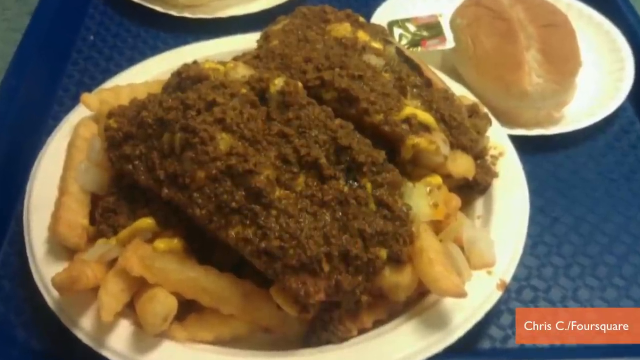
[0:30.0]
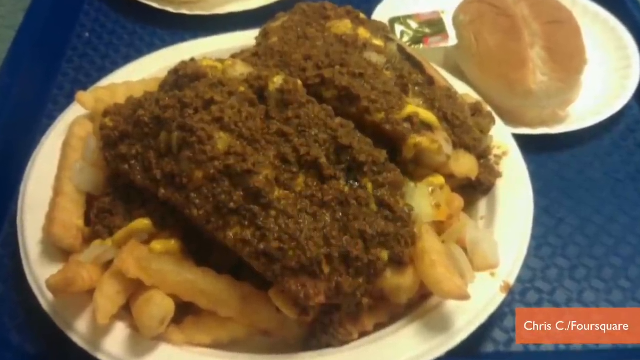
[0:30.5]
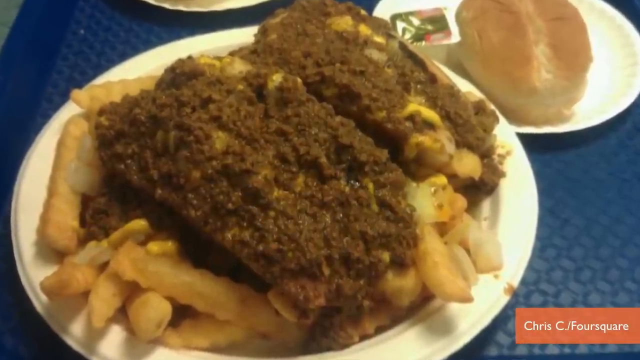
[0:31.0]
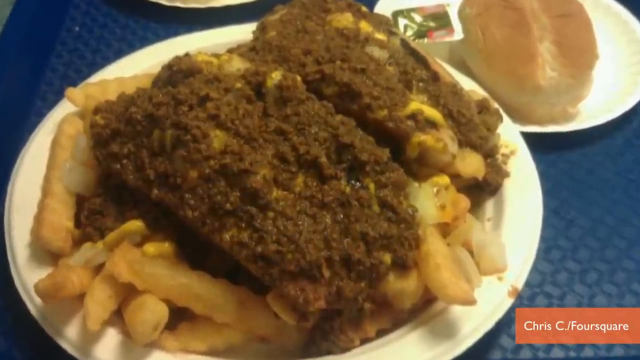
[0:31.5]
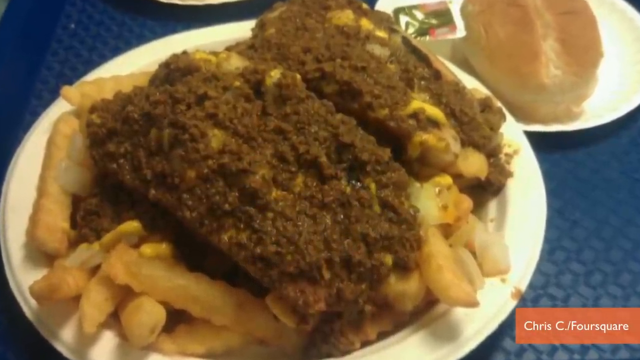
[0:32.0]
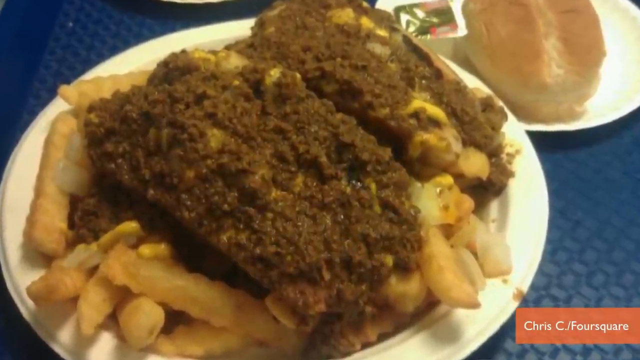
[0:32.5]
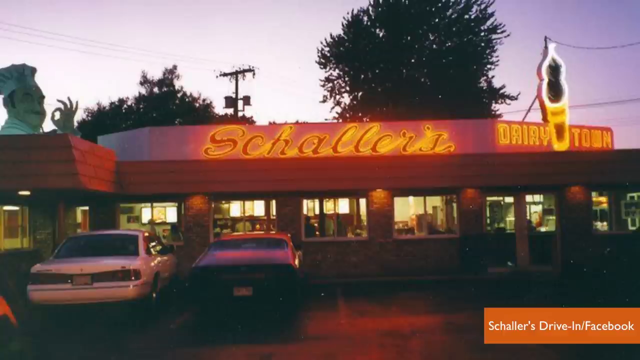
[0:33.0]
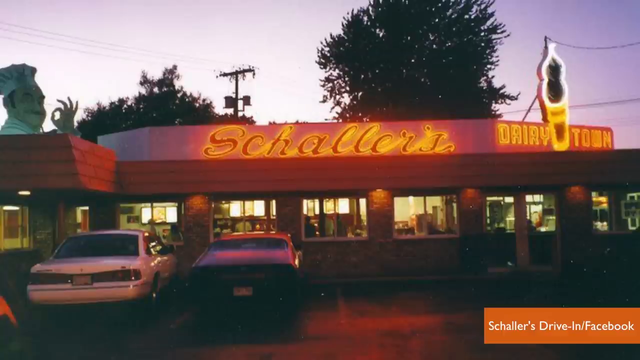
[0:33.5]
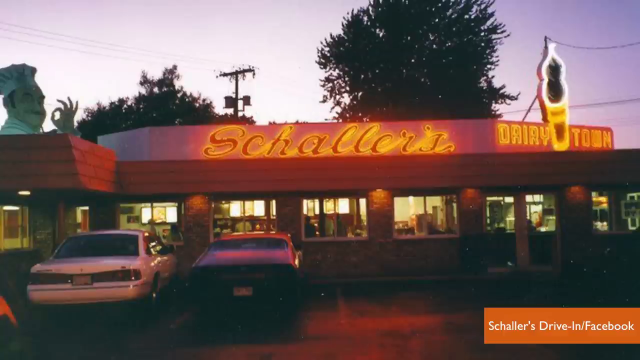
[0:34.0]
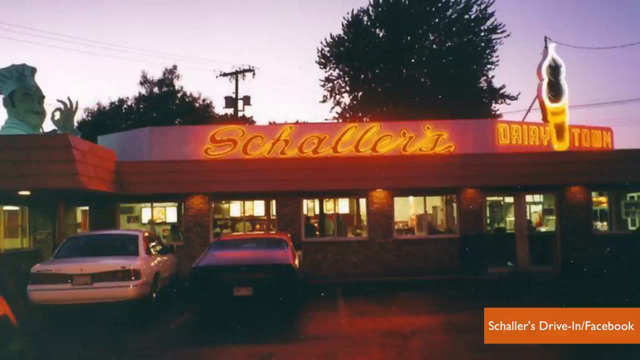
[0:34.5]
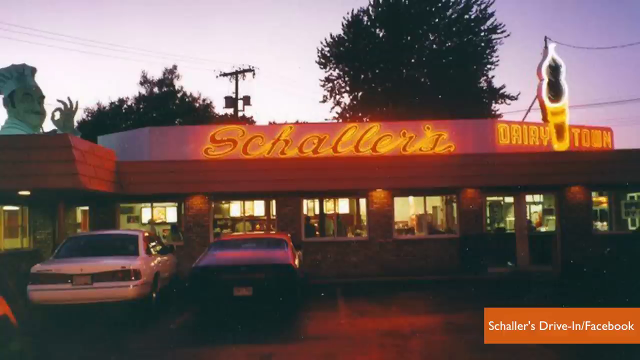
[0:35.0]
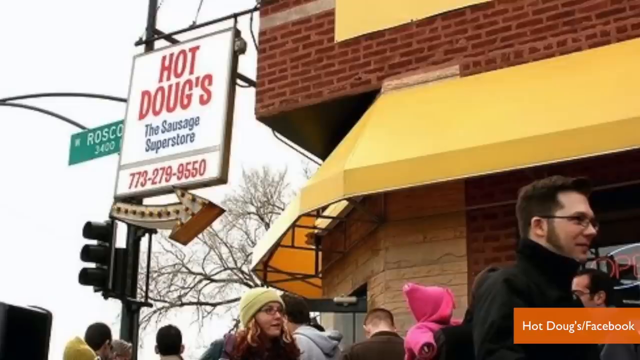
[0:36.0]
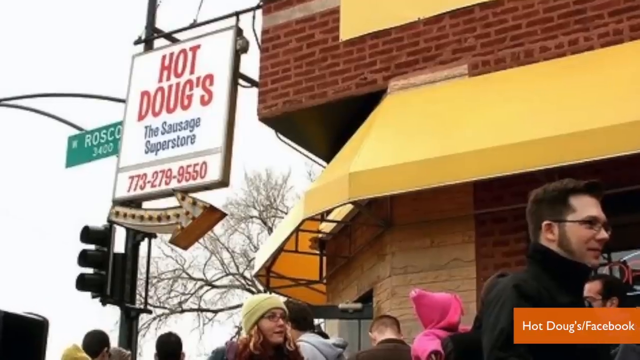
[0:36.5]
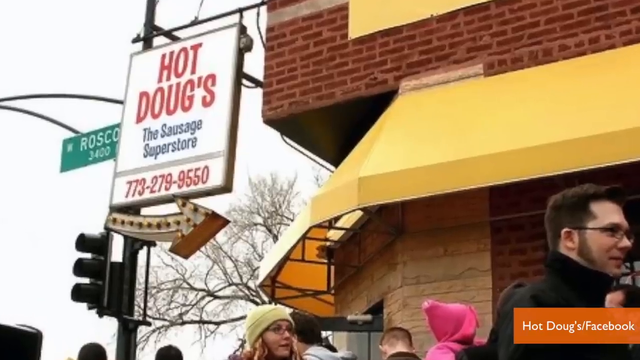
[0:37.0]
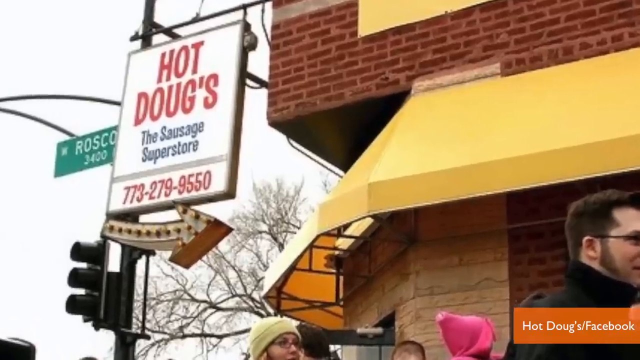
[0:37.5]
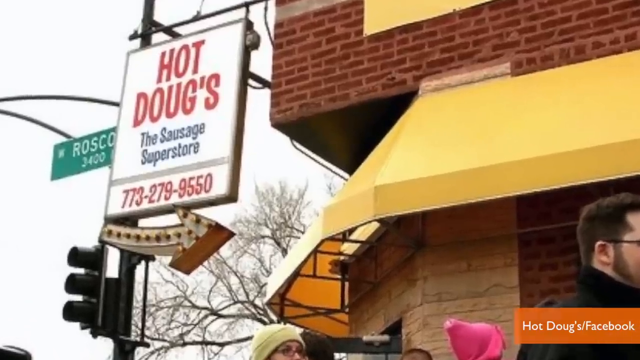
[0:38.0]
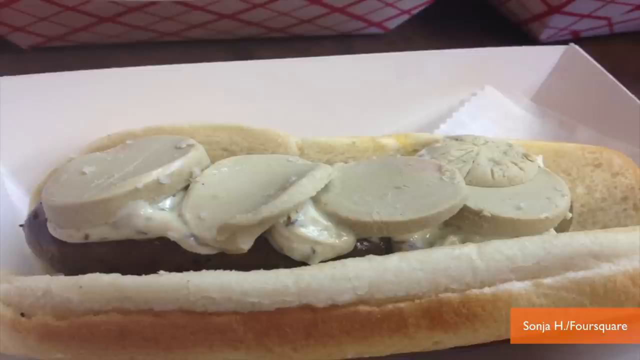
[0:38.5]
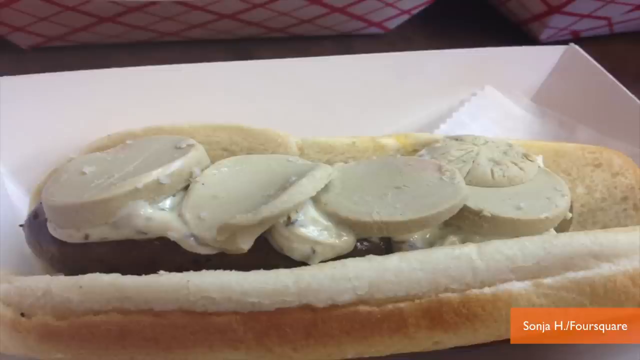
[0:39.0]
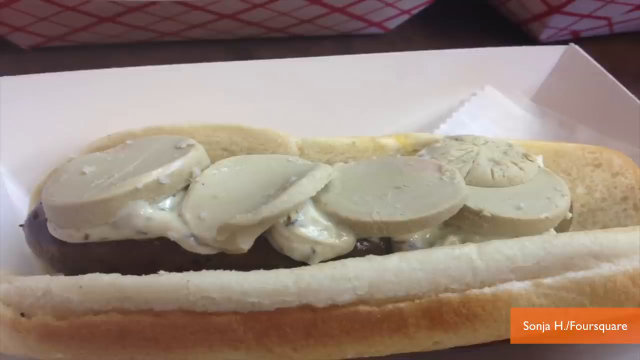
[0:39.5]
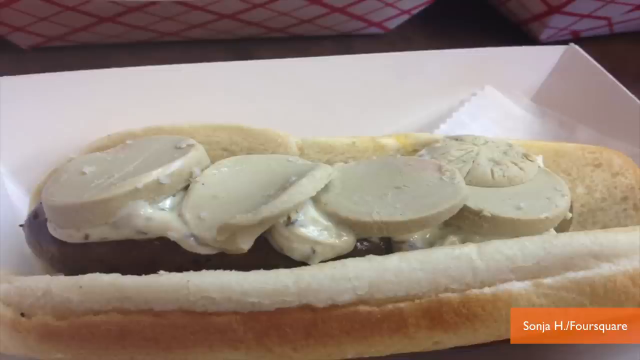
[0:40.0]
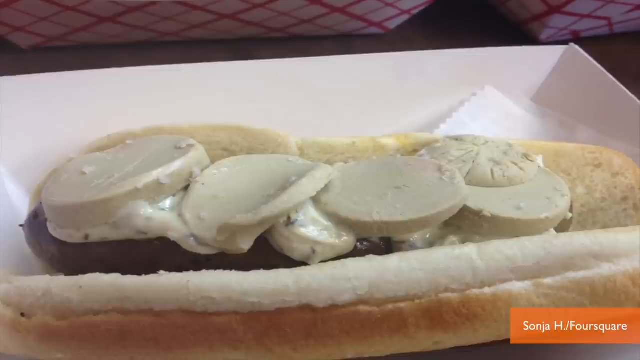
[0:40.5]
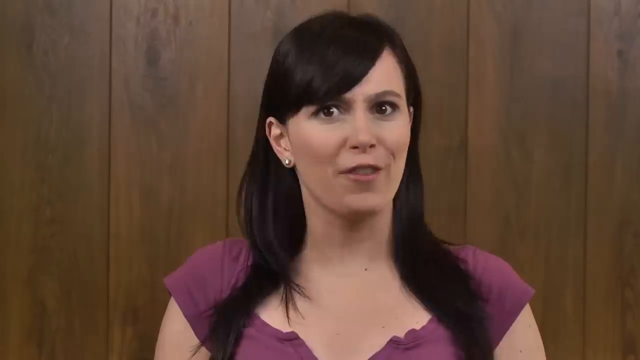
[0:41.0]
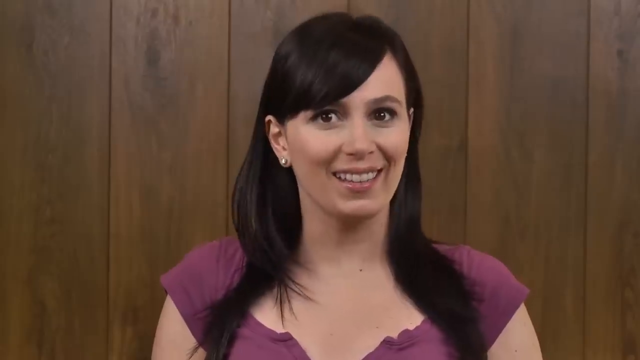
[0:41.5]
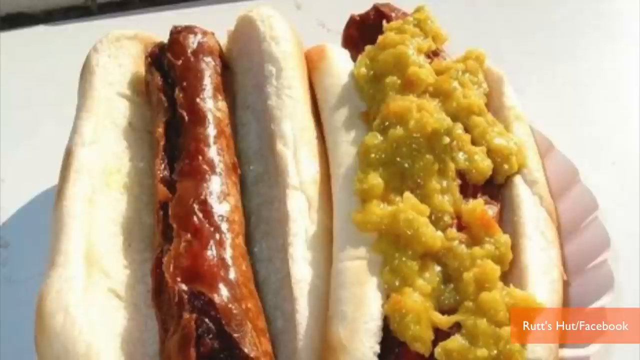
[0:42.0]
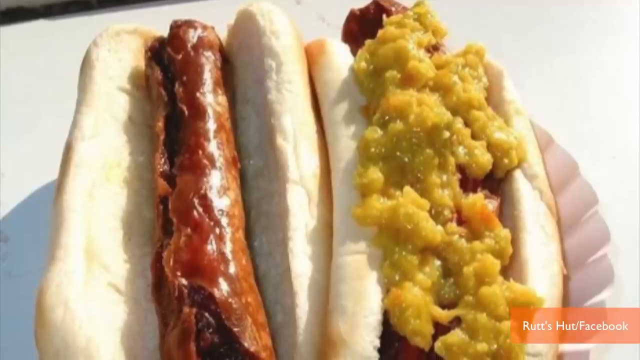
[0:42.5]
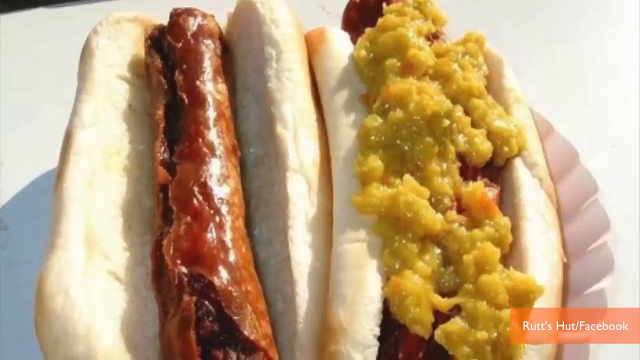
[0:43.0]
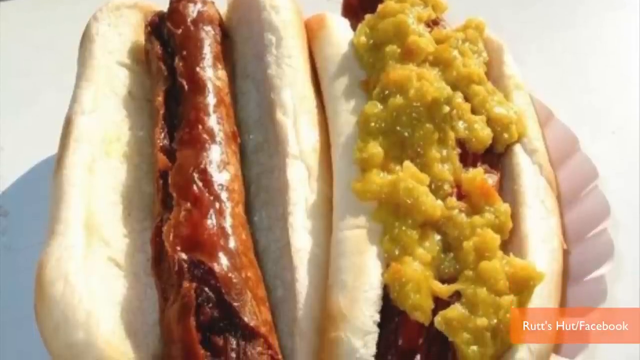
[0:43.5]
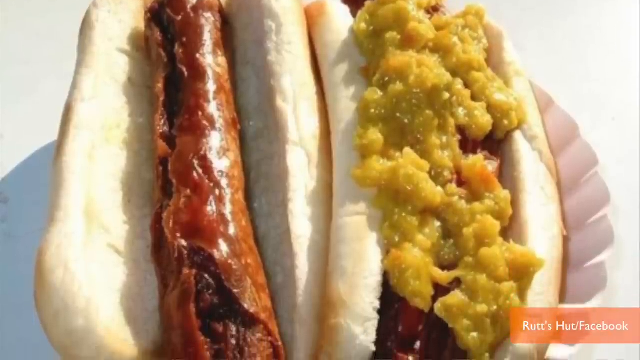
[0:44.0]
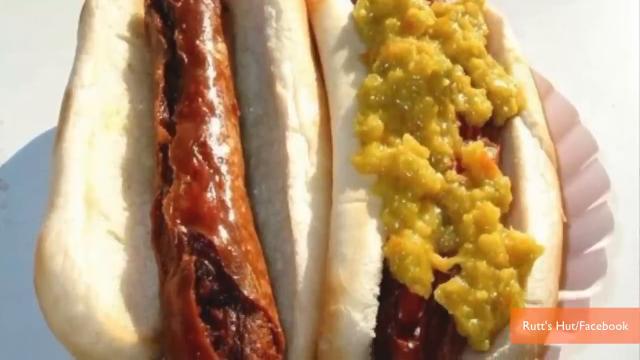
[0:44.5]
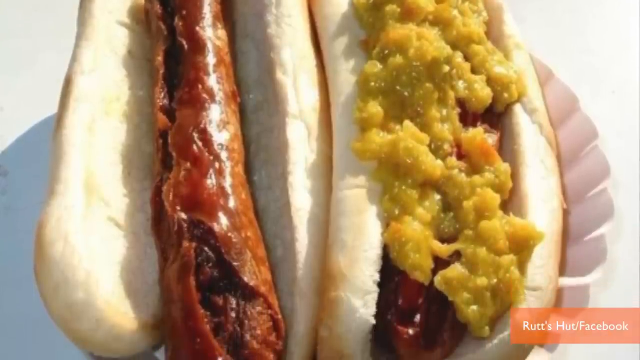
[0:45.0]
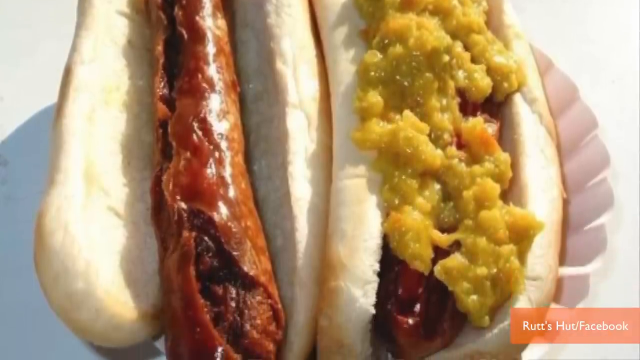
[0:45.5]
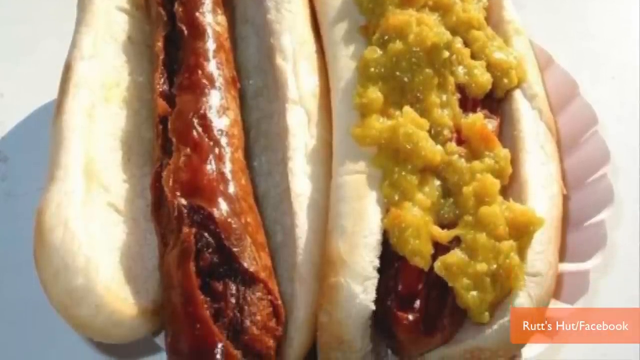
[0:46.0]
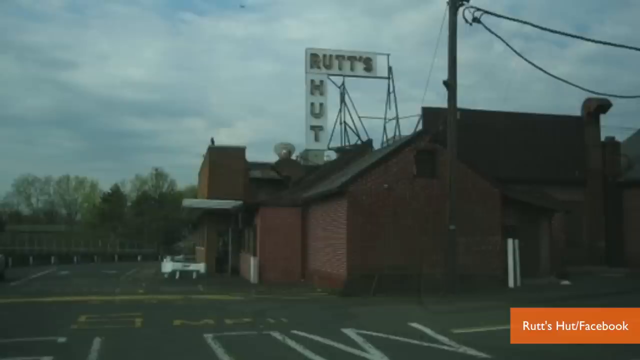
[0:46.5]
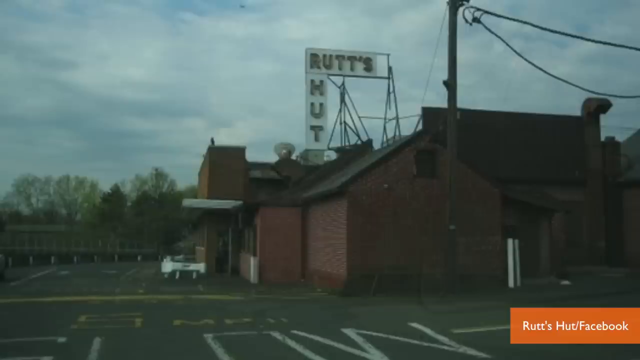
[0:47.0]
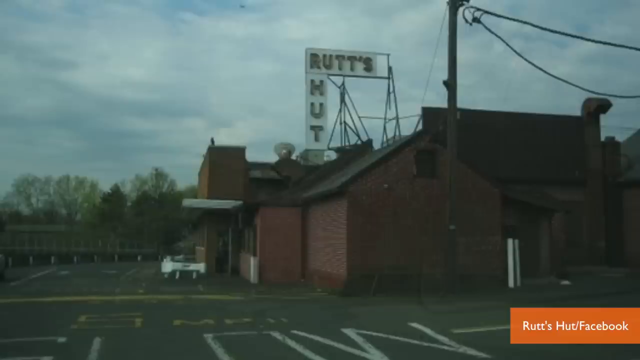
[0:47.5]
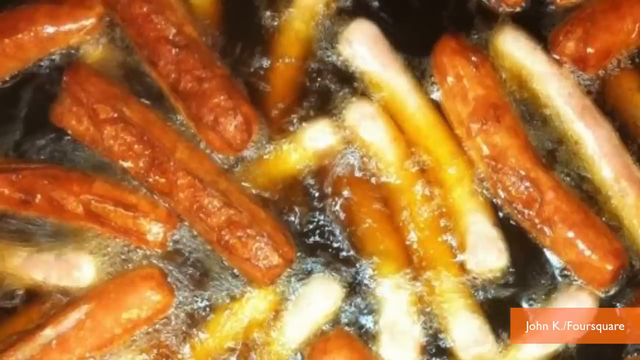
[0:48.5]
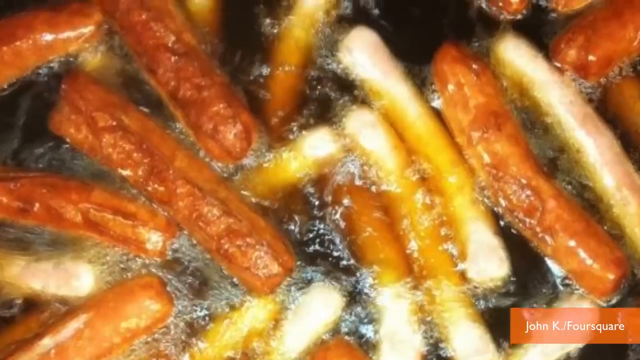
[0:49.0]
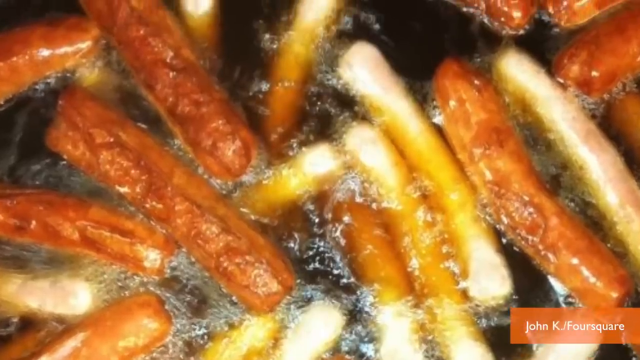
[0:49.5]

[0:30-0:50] Some plain hot dogs are shown, then a hot dog filled with something. While hot dogs are being prepared, something is put on top of a hot dog. A building is shown from outside, then inside, then the food. In the parking lot, hot dogs are being cooked; outside there is a black and white car and a stop sign. French fries appear with an unidentified brownie-like thing on top. Text beginning "hotdogtowls.com/Facebook" appears, apparently listing many hot dog joints to choose from. A lady is talking.